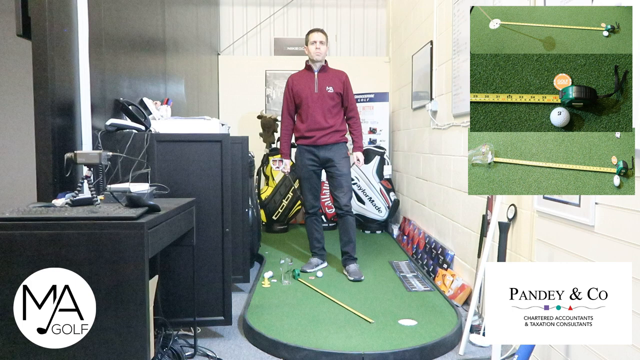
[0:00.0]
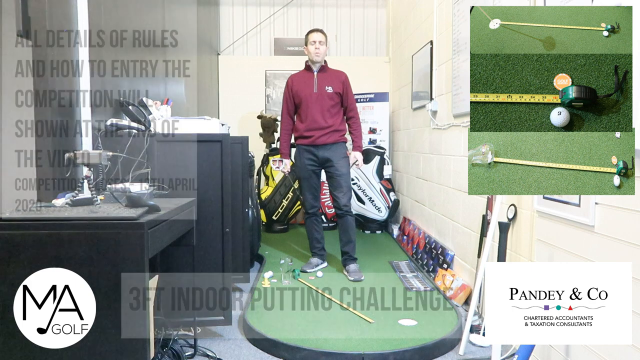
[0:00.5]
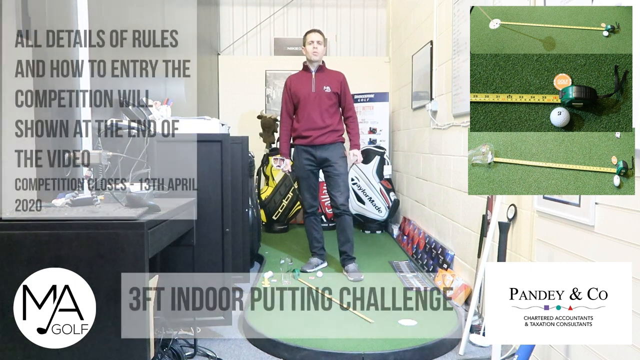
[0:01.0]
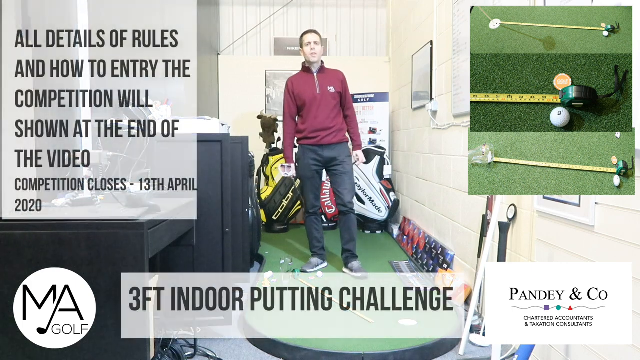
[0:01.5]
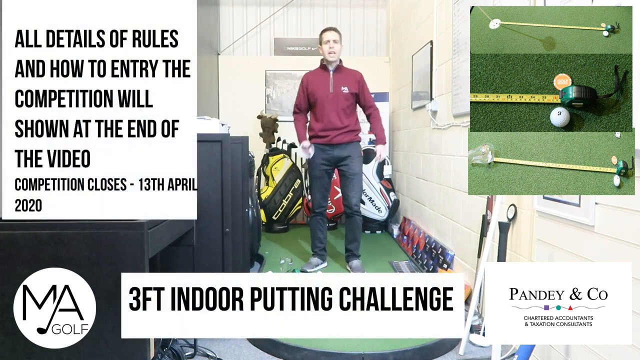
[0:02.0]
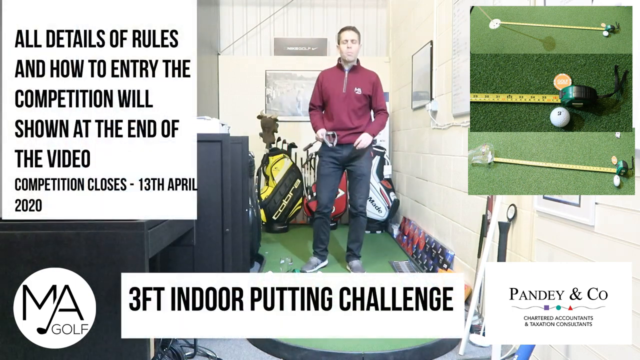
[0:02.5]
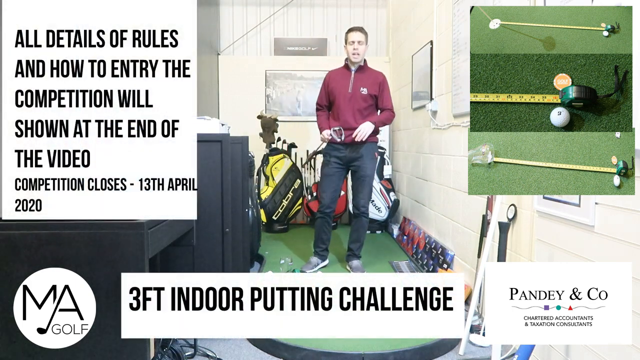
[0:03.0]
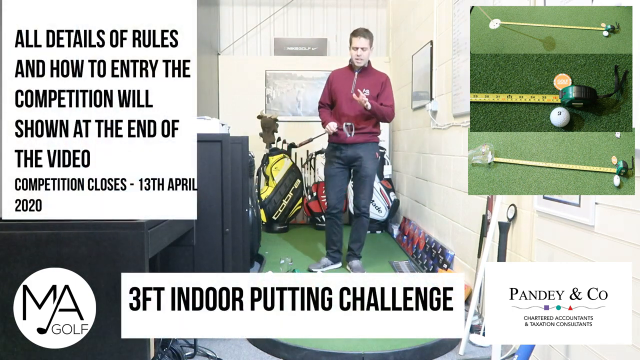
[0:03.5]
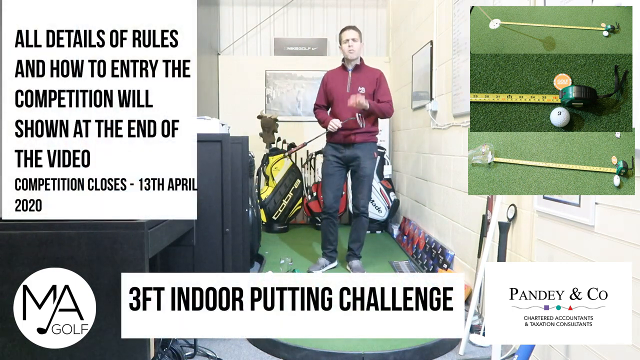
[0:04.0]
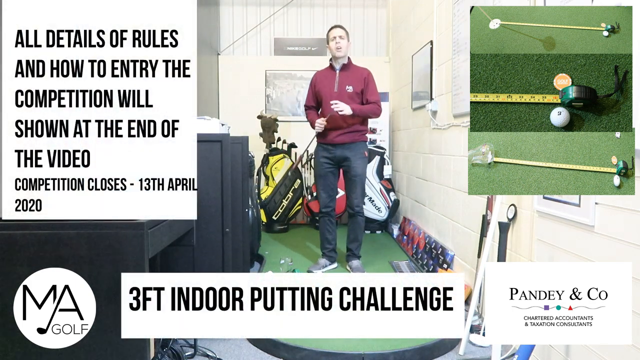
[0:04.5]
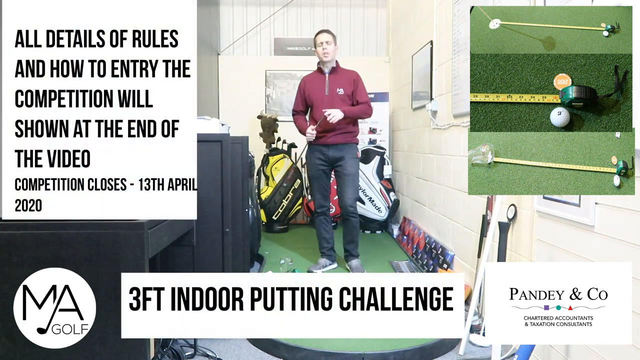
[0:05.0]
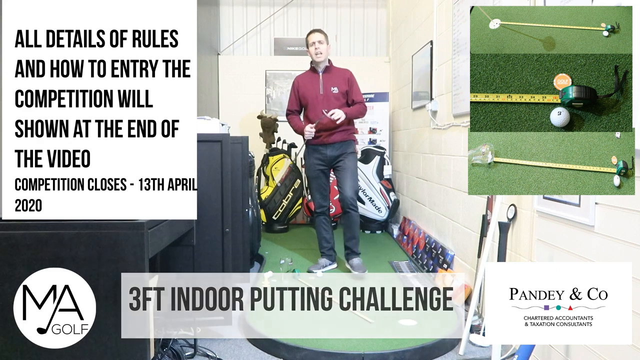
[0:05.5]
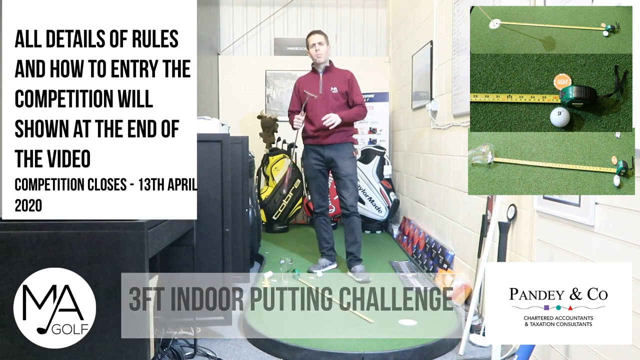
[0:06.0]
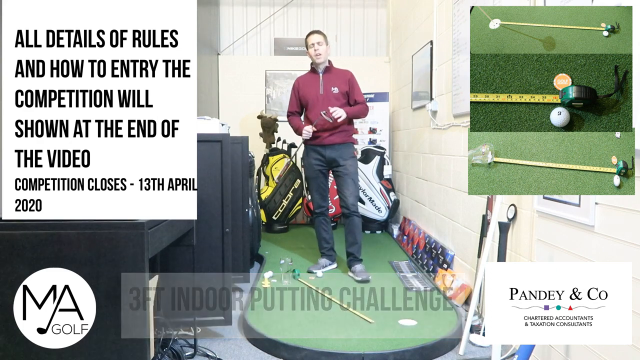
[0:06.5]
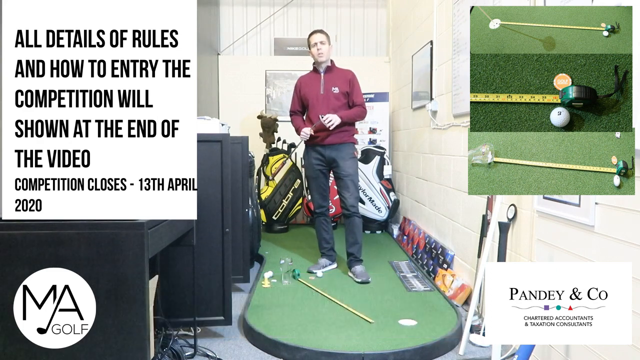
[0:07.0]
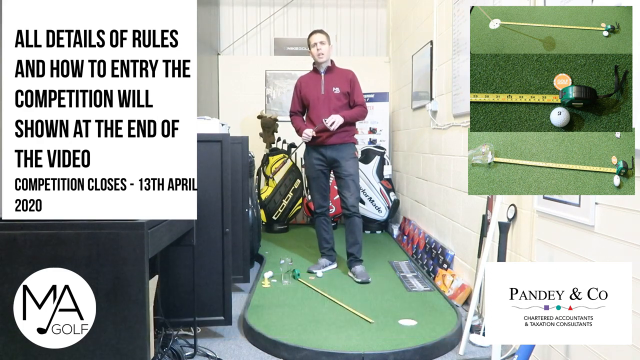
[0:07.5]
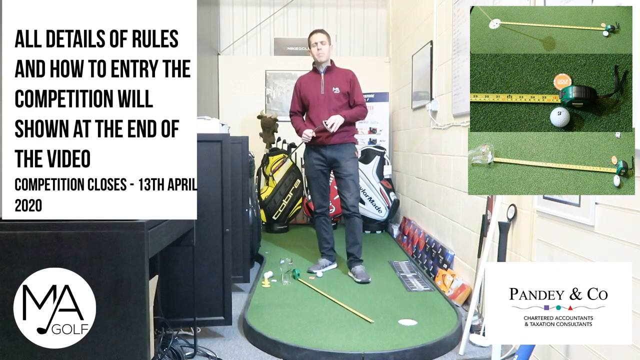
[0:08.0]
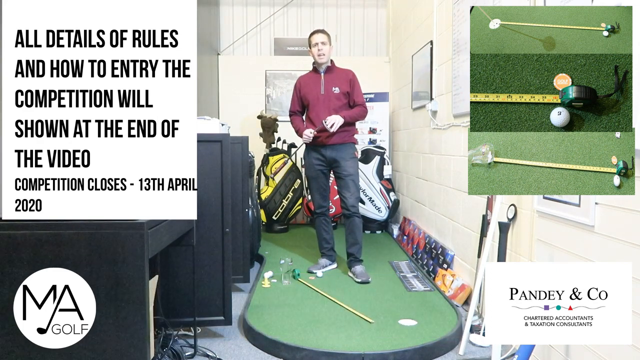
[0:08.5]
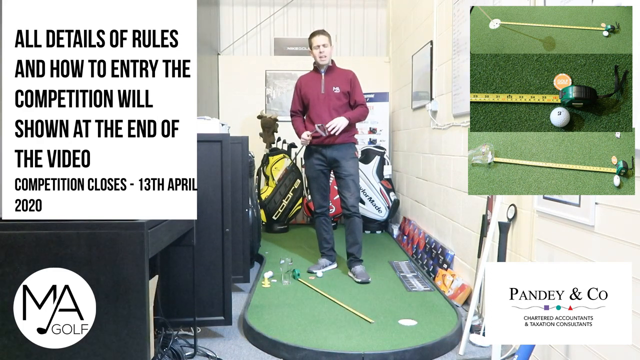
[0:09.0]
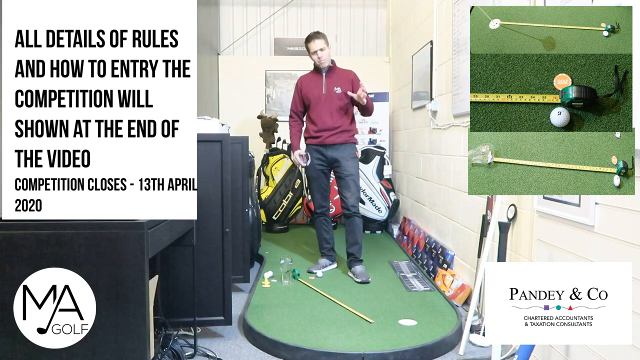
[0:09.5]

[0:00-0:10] A man is in a very small room, on what looks like a small golf course. A measuring tape is on the floor in front of him, and there are some golf clubs in the back. In the top right, a different perspective of the video appears: an aerial view of the measuring tape down on the ground with the golf ball next to it, as well as the clubs. In the top left, text on the screen reads "all details of rules on how to entry the competition will be shown at the end of the video" and "The competition closes on the 13th April 2020." Sponsors appear at the bottom of the screen, a chartered accountant company.